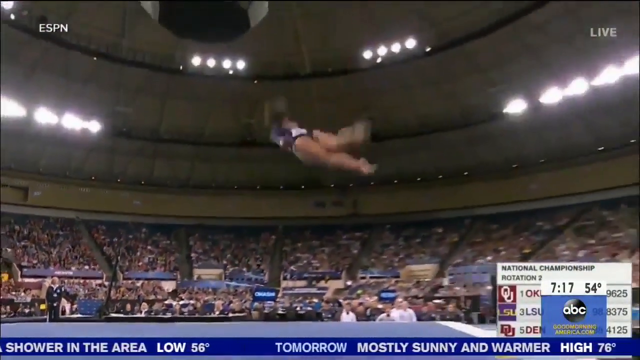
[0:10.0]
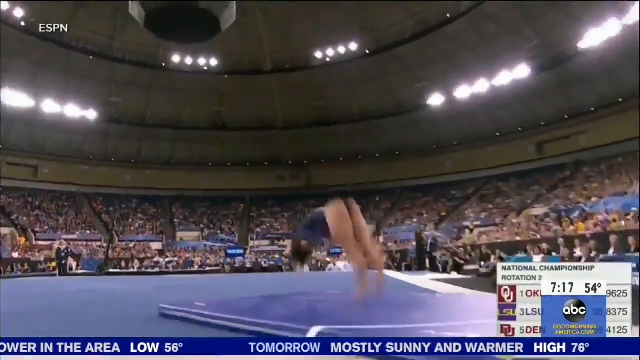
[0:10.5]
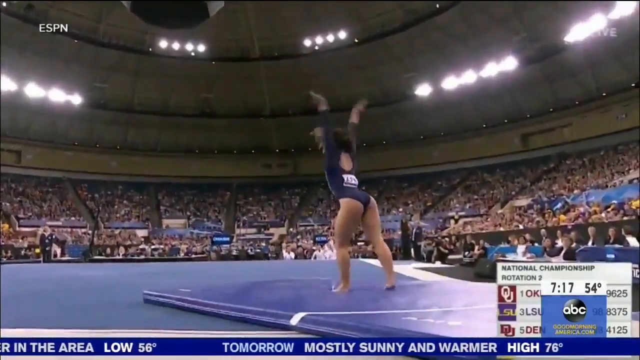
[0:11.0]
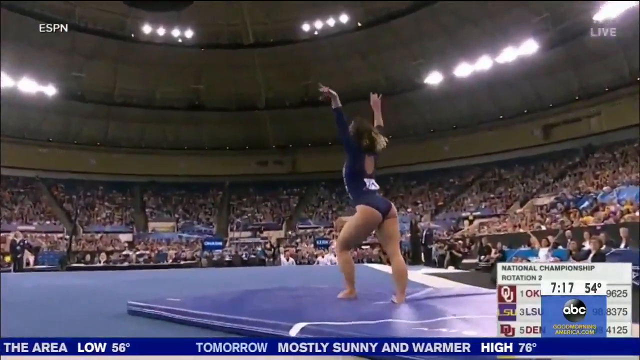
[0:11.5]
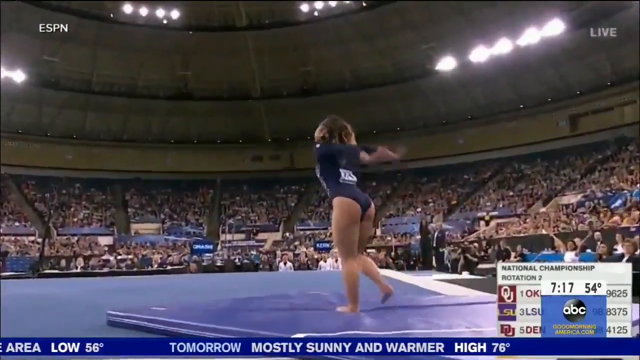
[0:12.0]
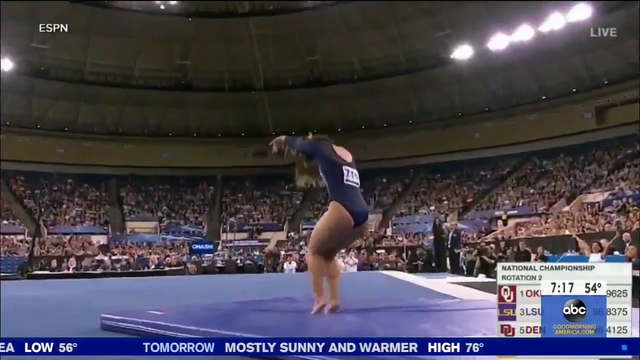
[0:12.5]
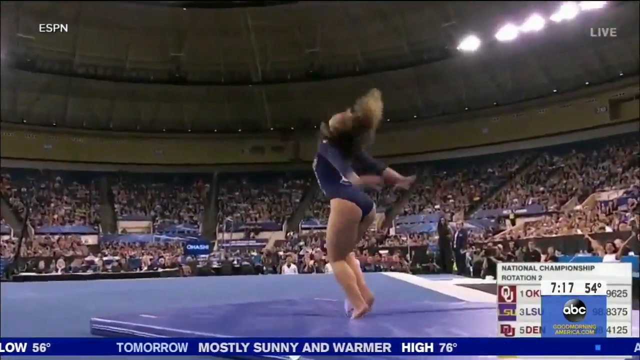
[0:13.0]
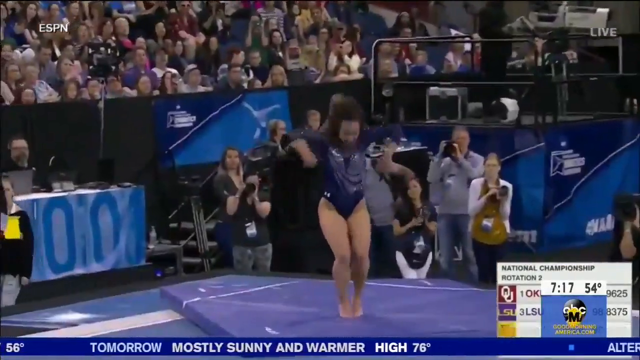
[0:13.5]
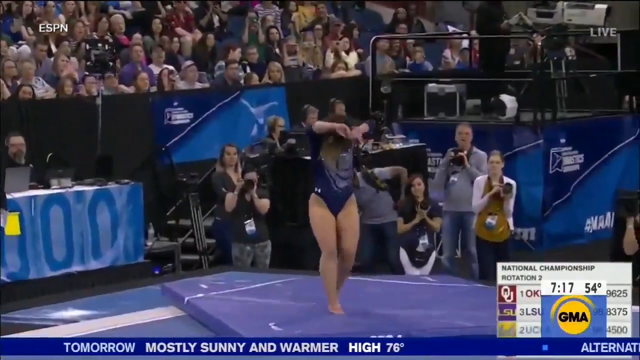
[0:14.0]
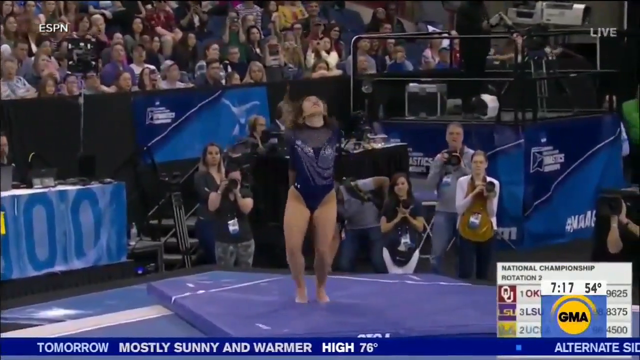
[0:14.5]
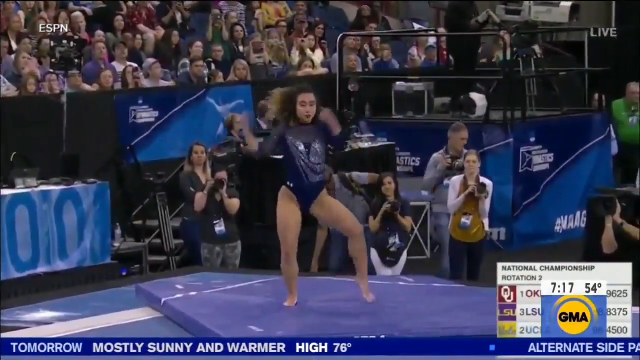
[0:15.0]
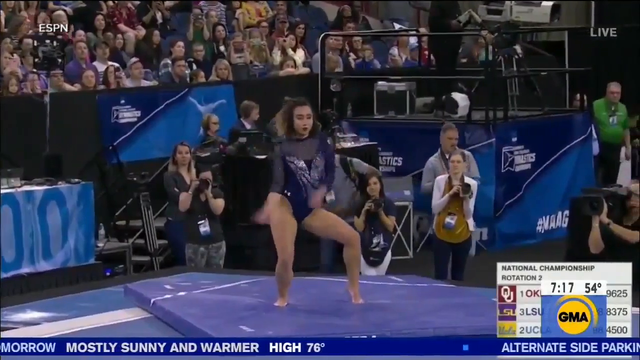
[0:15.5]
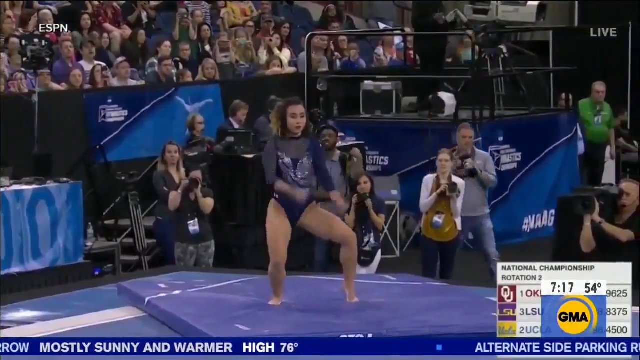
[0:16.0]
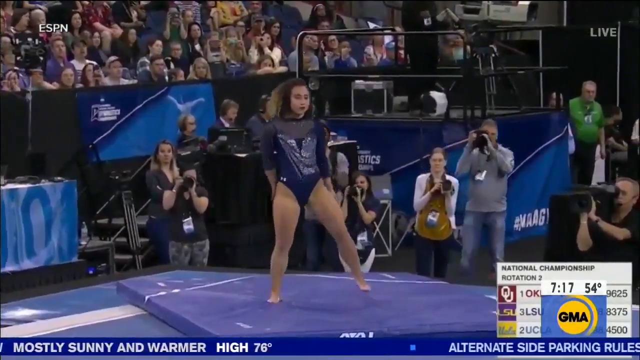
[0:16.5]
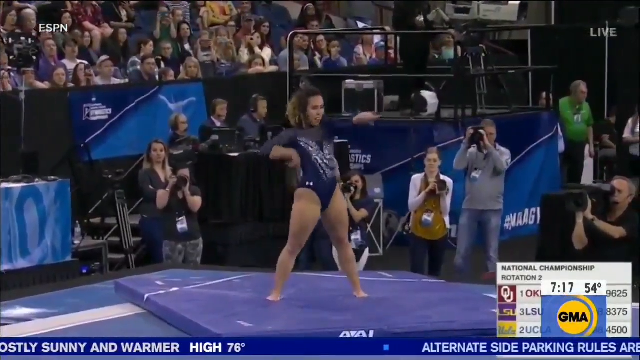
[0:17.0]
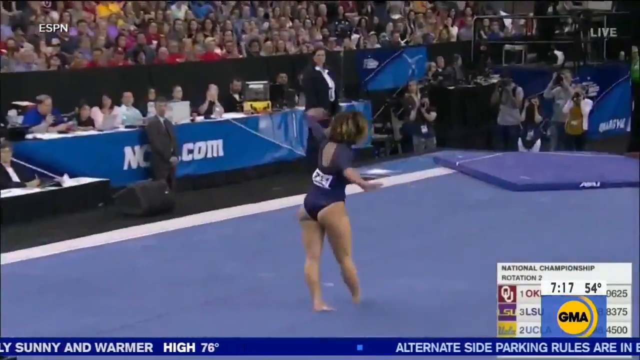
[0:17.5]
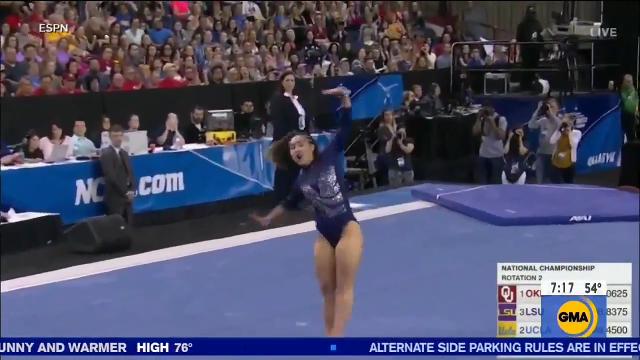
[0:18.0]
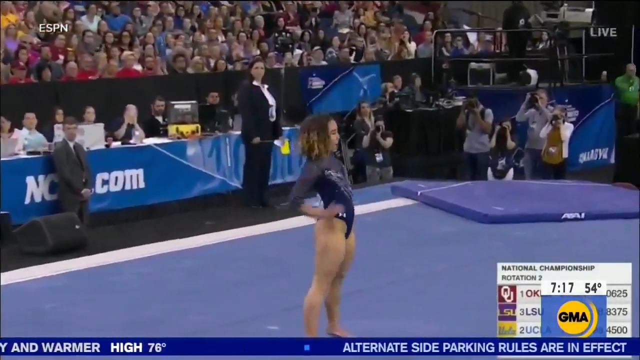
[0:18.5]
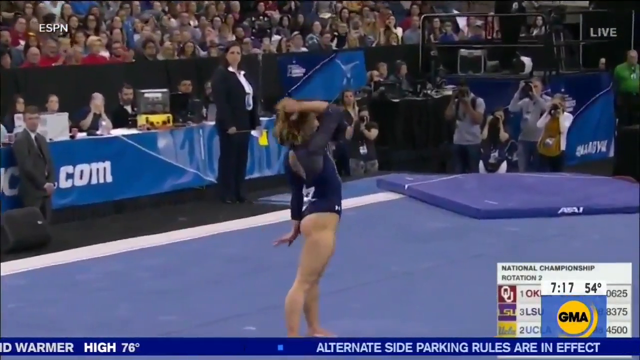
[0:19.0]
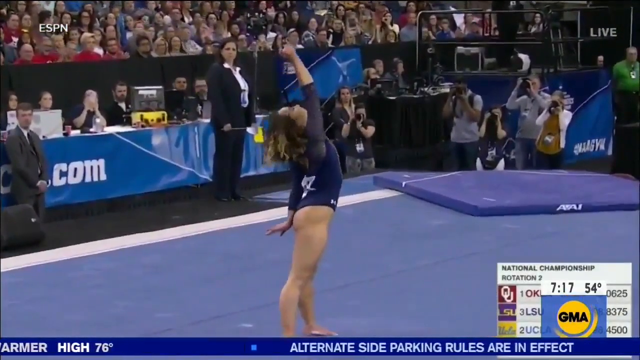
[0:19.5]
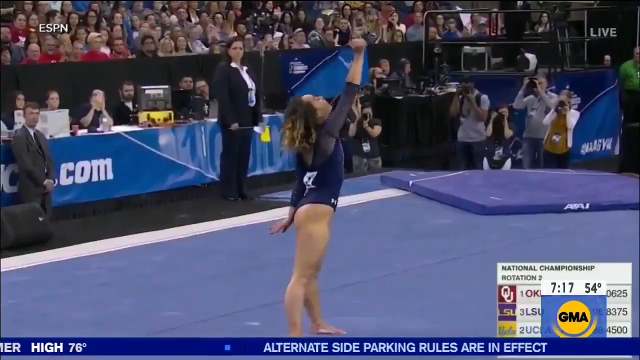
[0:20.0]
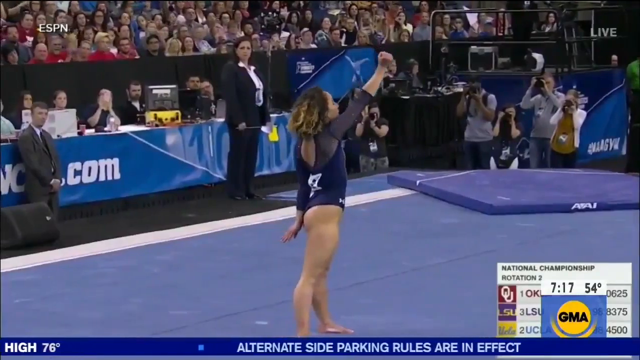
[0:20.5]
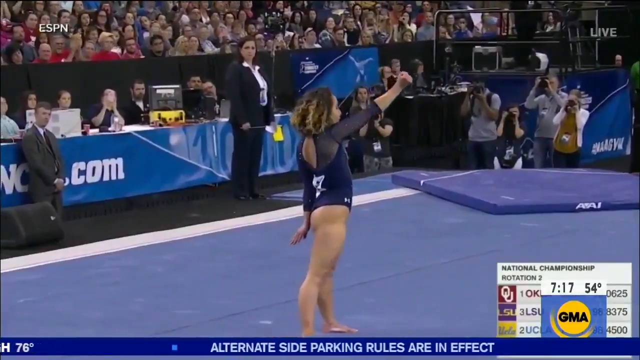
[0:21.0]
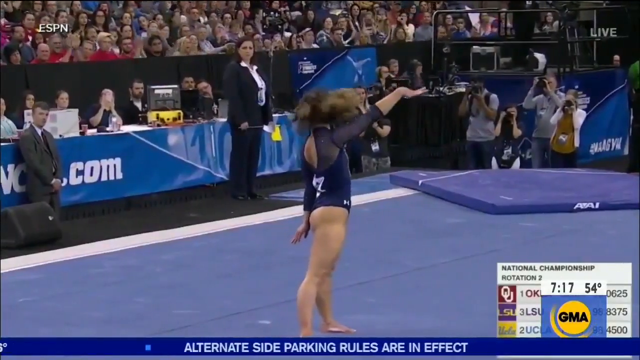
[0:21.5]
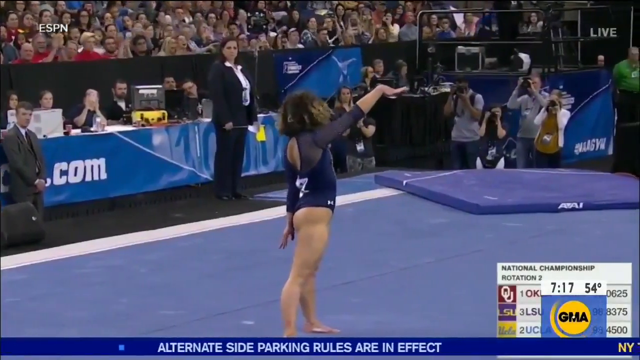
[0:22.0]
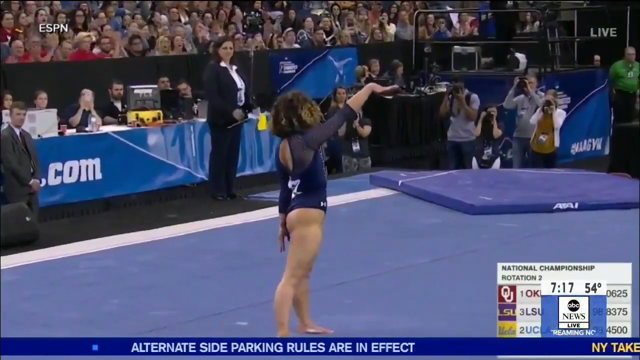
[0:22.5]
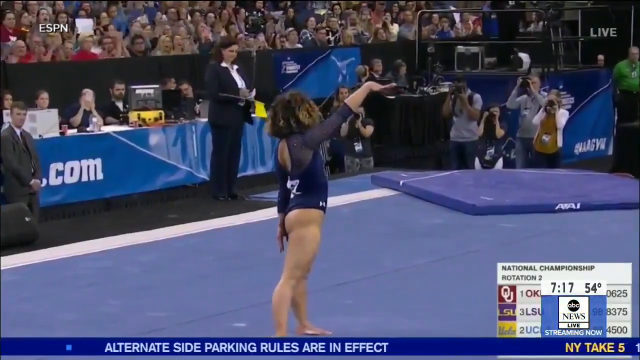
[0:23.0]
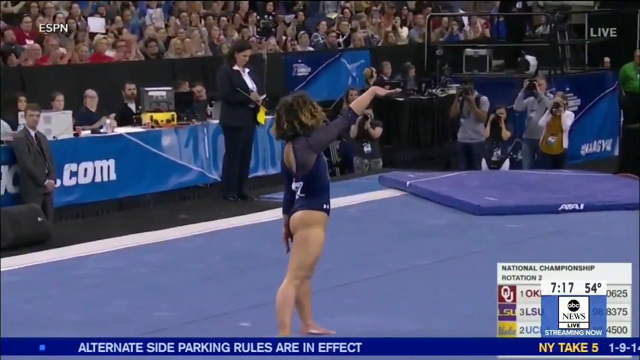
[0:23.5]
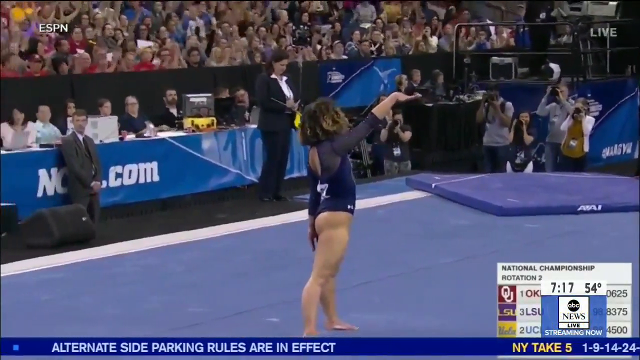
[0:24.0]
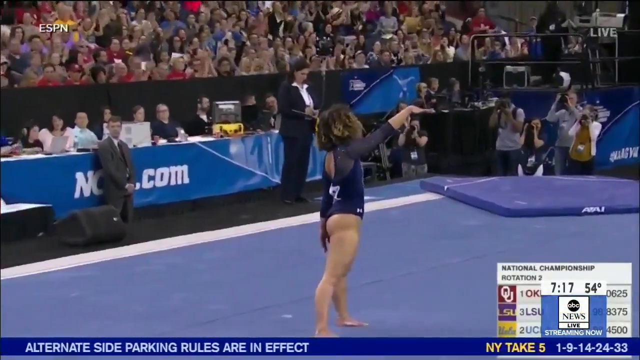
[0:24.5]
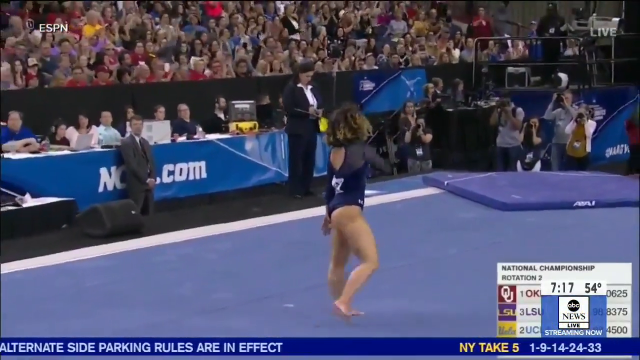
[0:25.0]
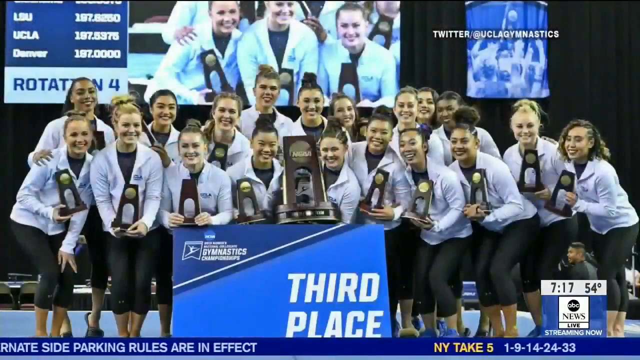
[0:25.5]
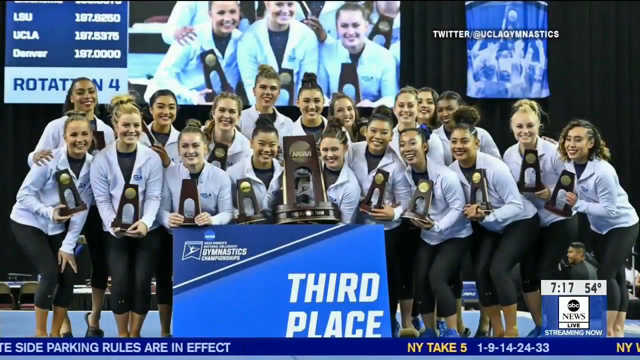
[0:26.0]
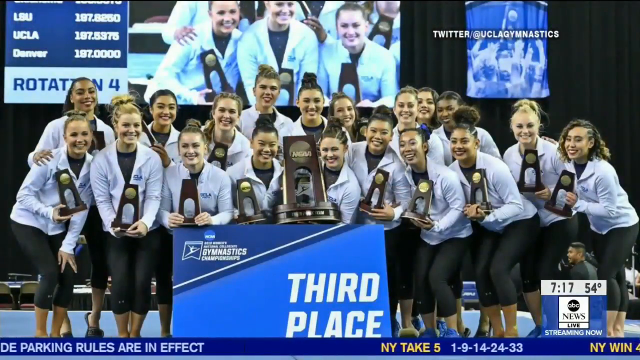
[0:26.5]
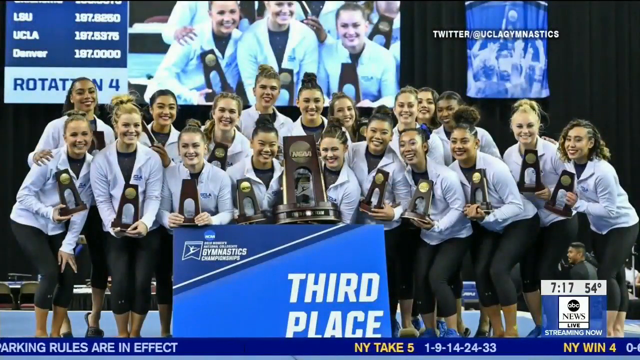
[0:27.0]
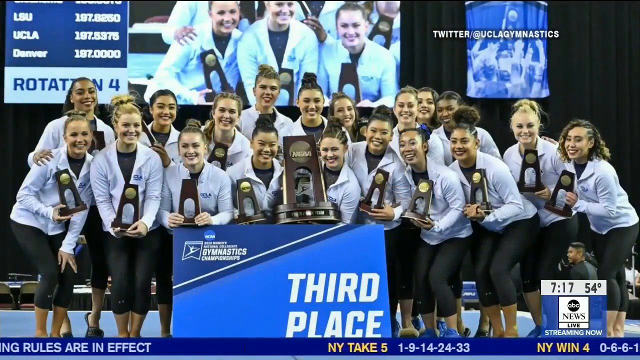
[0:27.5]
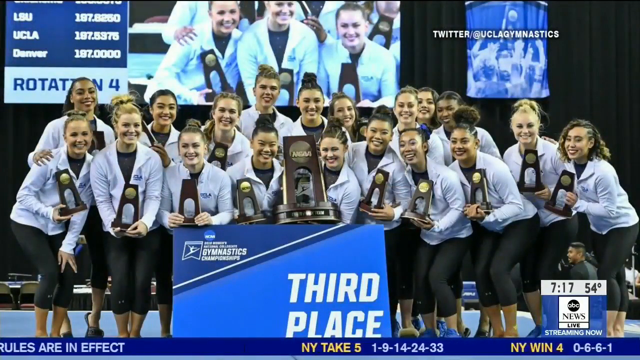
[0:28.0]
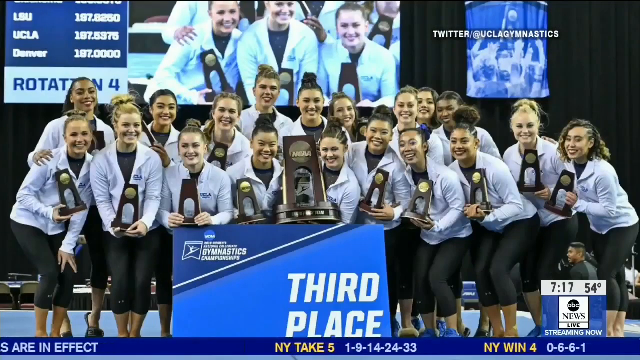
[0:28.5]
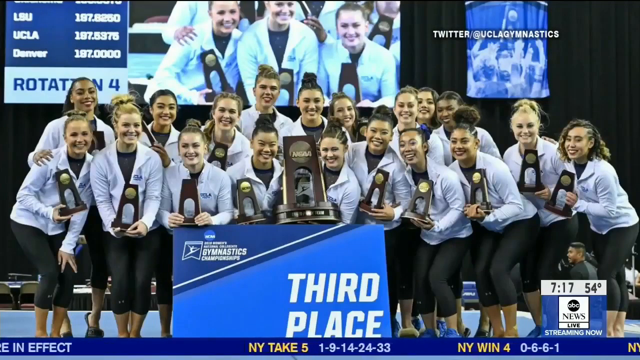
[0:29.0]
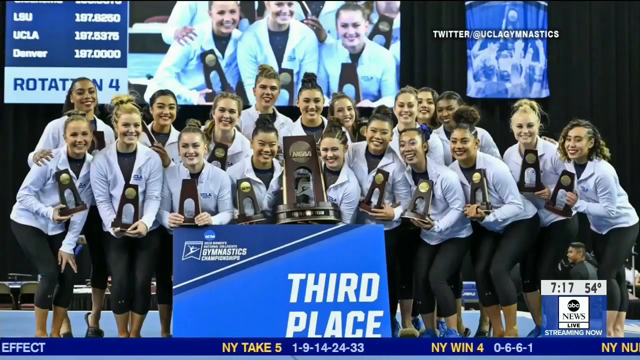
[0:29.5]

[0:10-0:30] Gymnastics challenges are shown. A woman performs tricks, then does some unusual moves, dancing and moving her hands and legs in front of many viewers, who are having fun and cheering for her. She has a very athletic posture, is small, and has short curly hair; behind her are some bodyguards and judges of her performance. Next comes a photo, possibly from the Olympics, related to the NCAA gymnastics championships: the team placed third, all of the members hold cups, and there is one big cup from the tournament. This is GMA news from the ABC TV station.